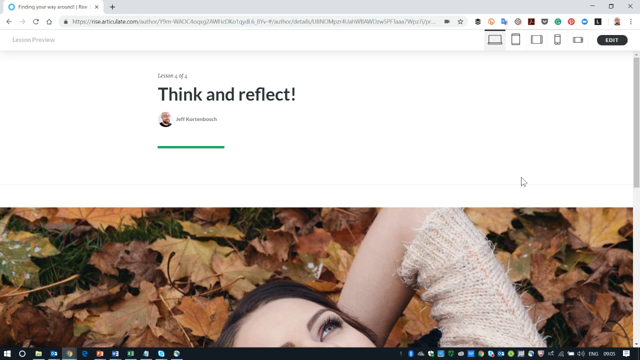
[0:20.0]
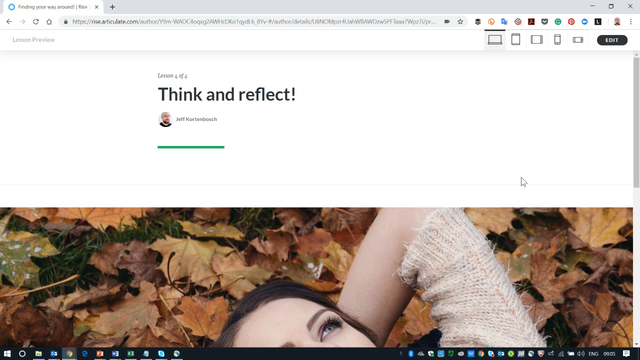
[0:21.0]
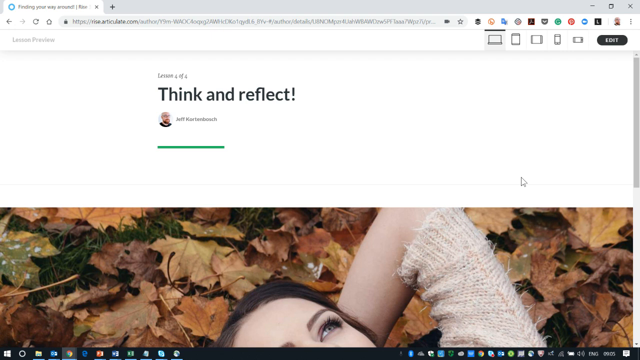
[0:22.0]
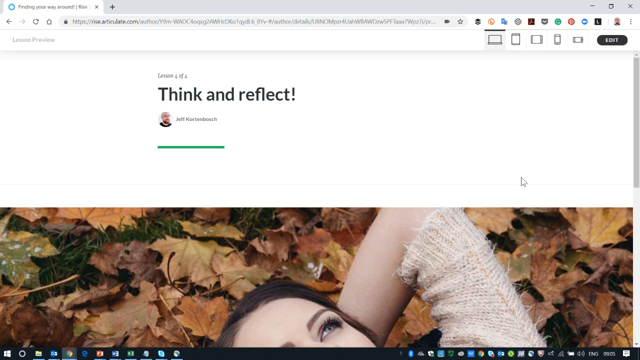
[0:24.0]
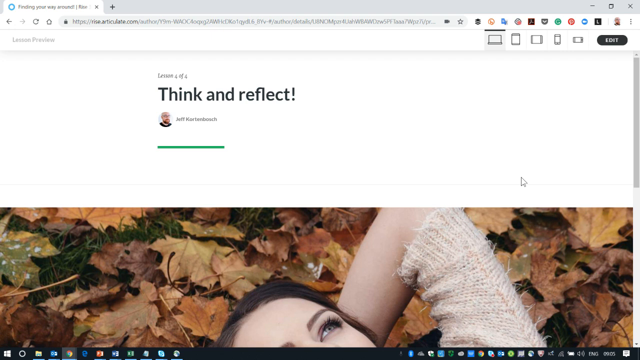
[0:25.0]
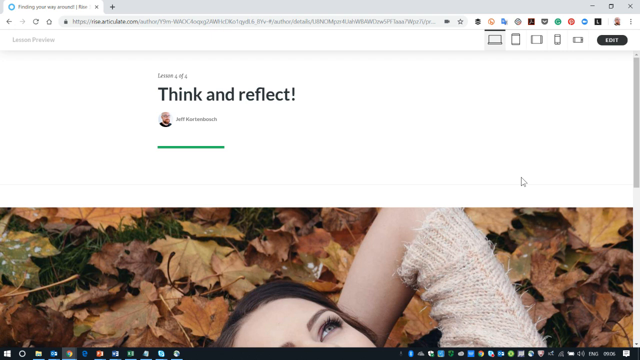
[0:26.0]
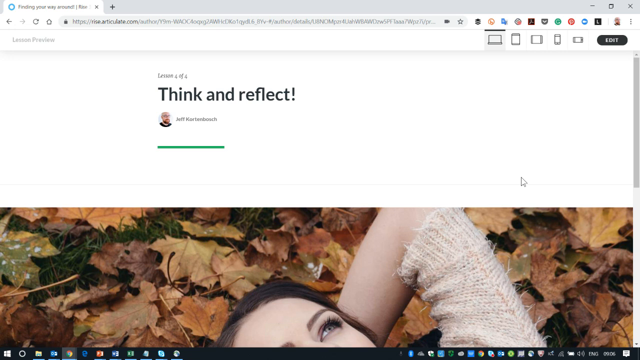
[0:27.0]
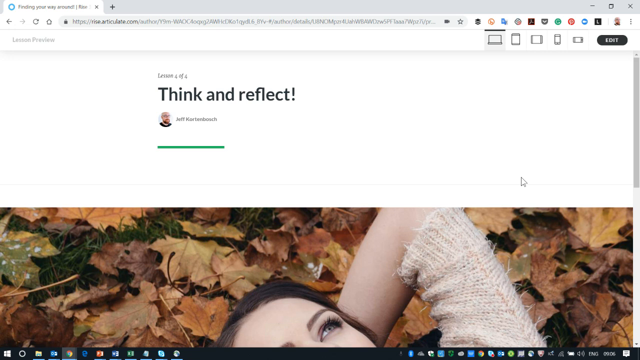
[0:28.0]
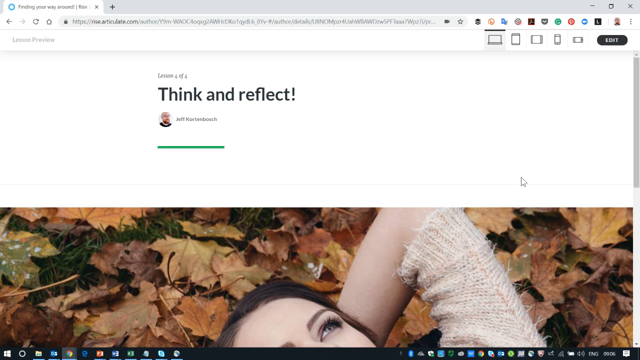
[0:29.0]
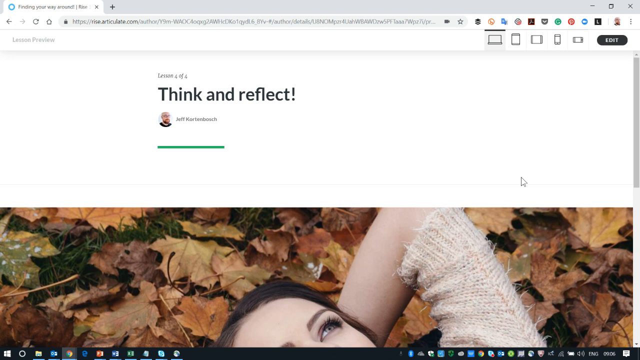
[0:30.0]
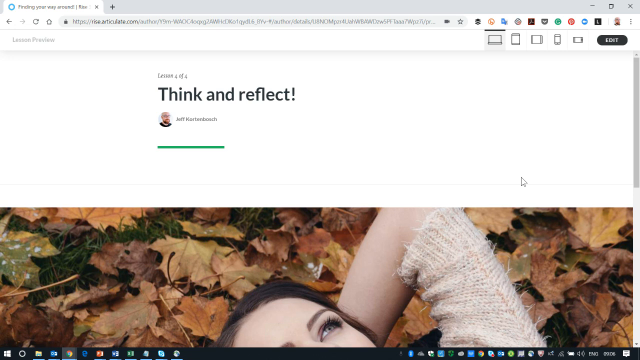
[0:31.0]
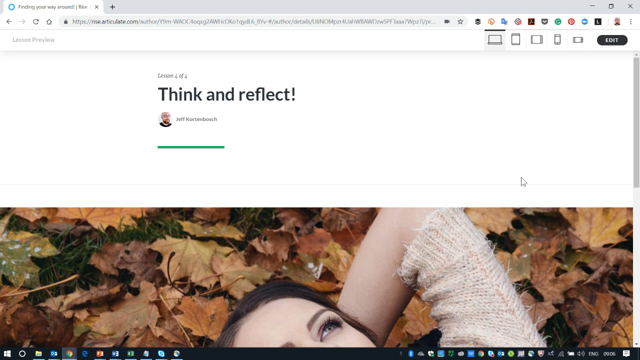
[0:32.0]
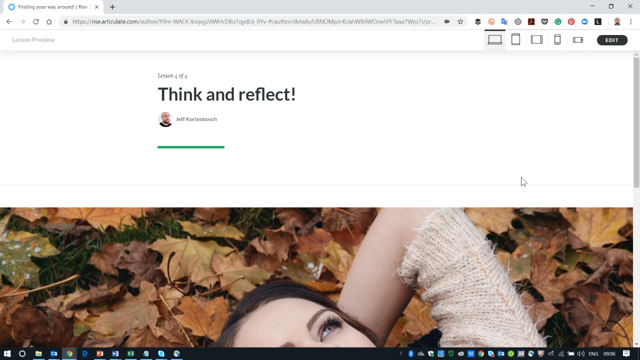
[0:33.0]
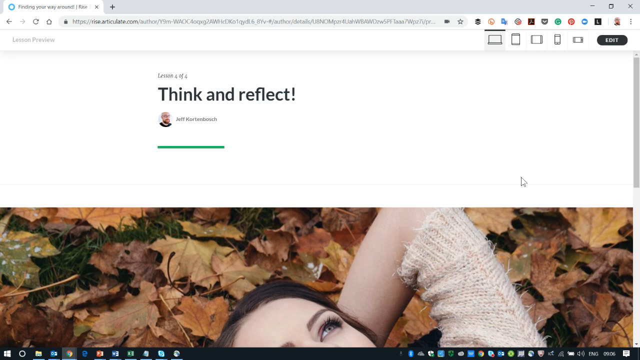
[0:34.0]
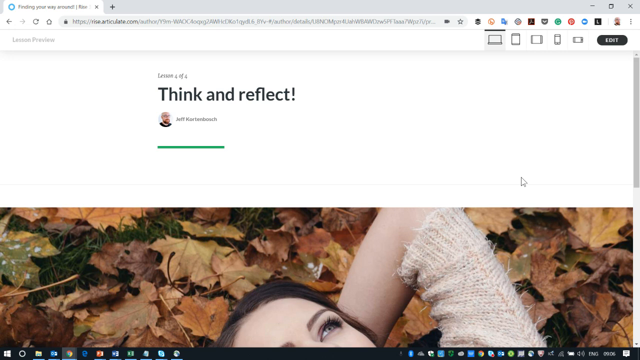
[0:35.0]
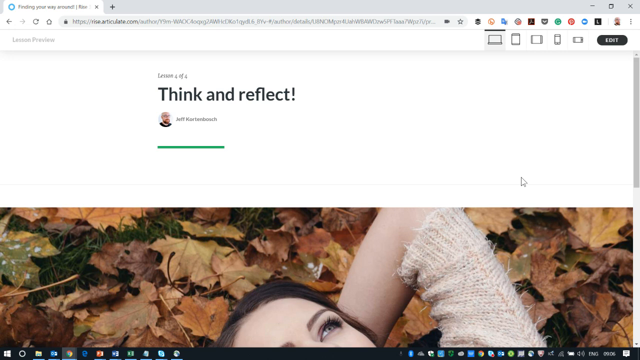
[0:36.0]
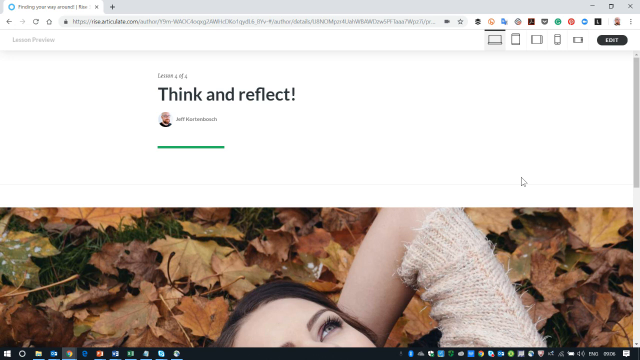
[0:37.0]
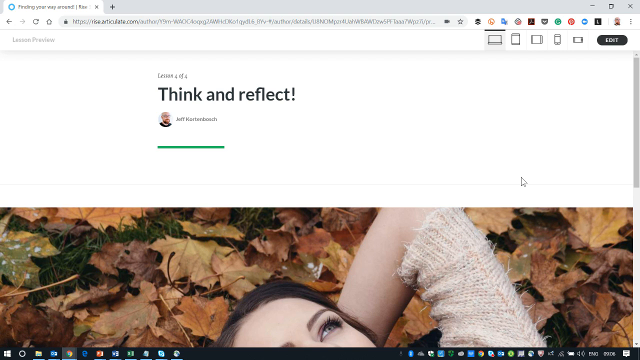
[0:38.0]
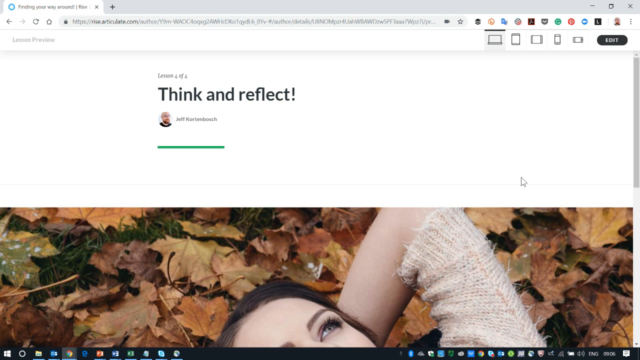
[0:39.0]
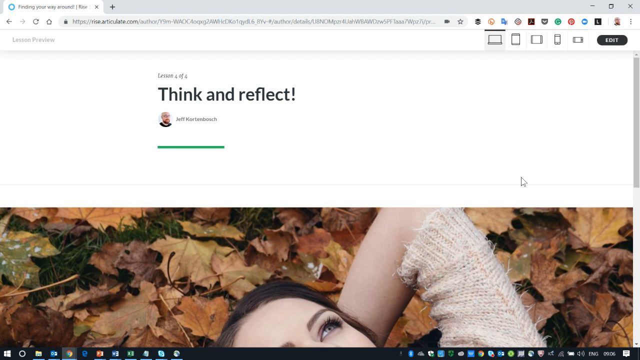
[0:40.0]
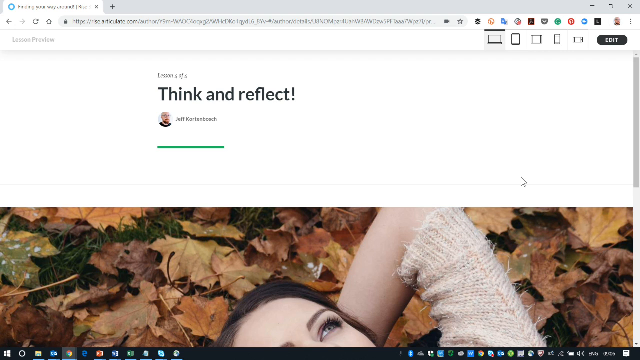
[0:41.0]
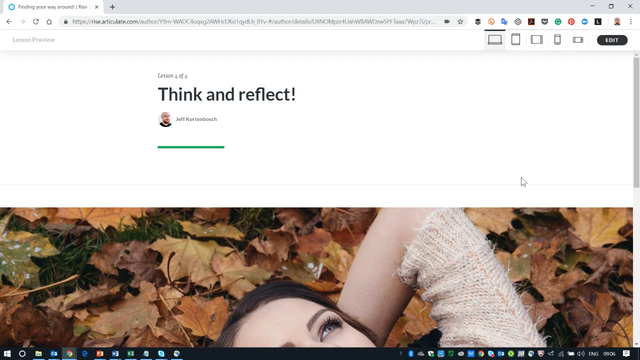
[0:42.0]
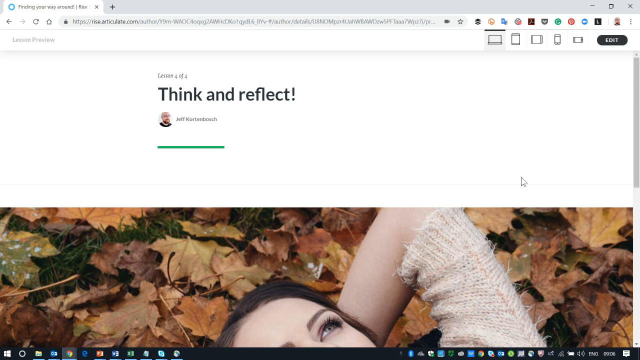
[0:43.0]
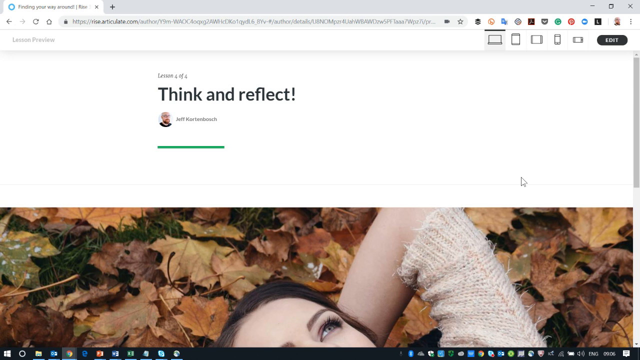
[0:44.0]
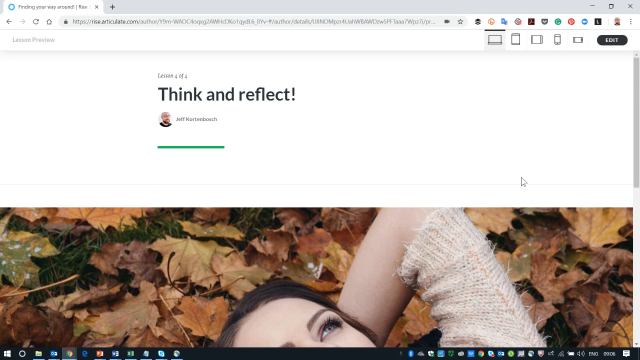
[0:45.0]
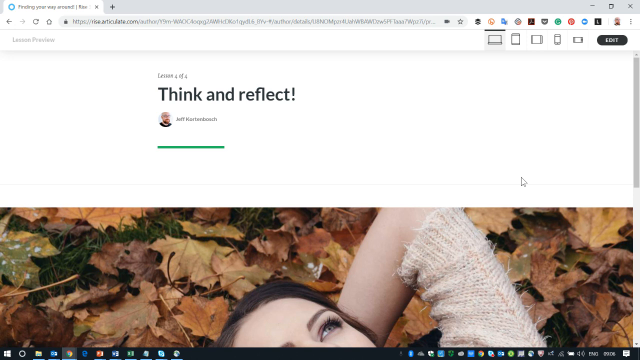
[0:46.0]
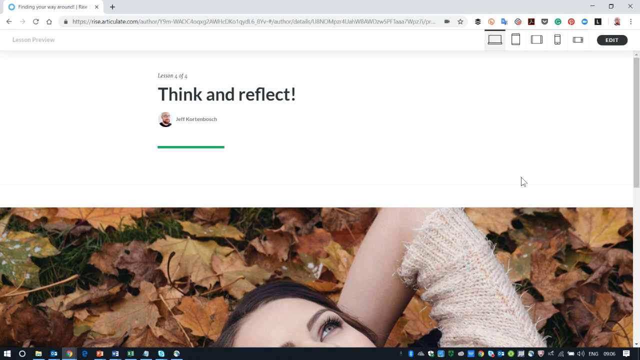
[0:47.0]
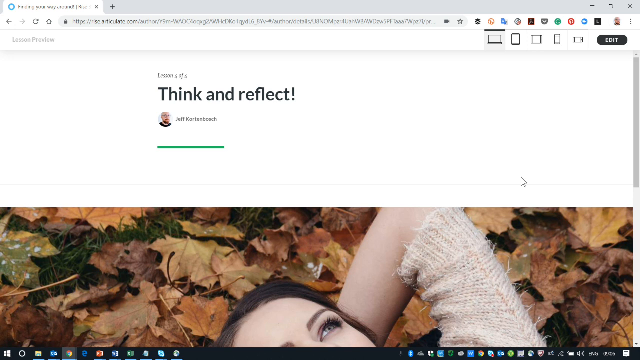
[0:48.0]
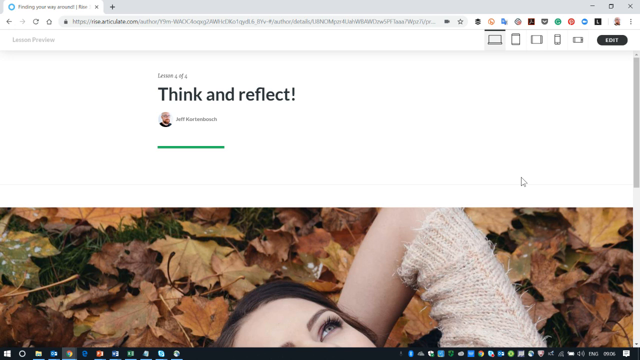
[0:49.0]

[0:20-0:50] A lady is lying down, and a profile of a man called Jeff is shown, with a green colour under his name. The page is a tab opened on a website that has an edit option. The main topic is think and reflect, taught in four out of four lessons, and the lady appears to be in a think-and-reflect mode.